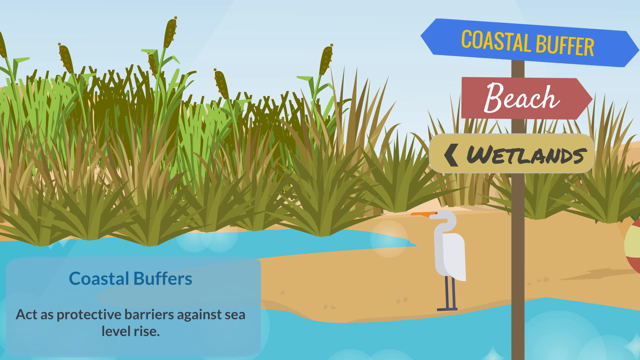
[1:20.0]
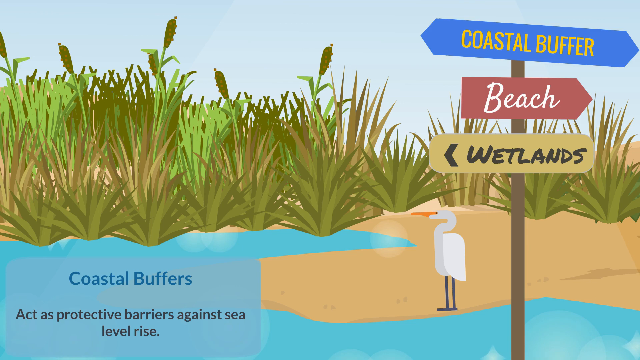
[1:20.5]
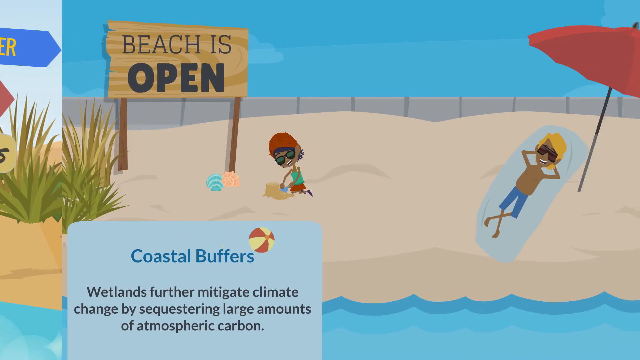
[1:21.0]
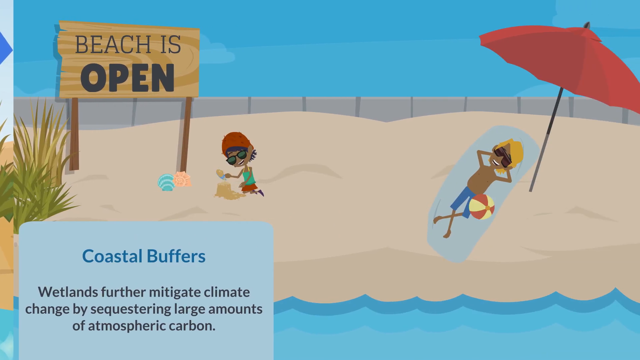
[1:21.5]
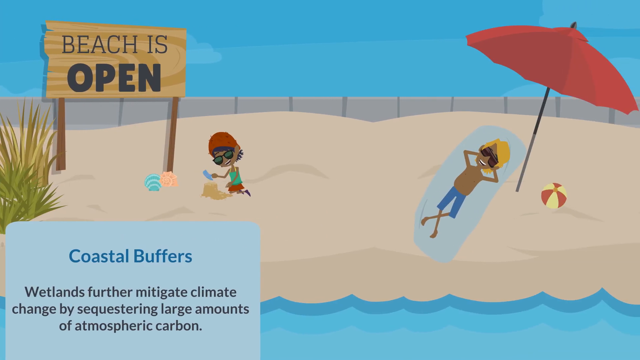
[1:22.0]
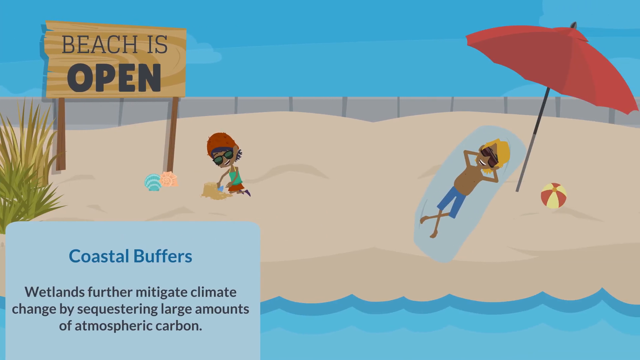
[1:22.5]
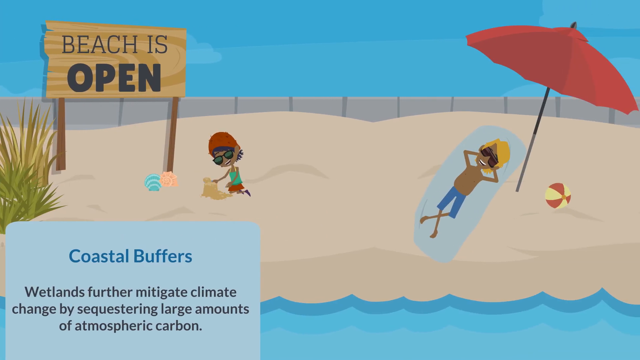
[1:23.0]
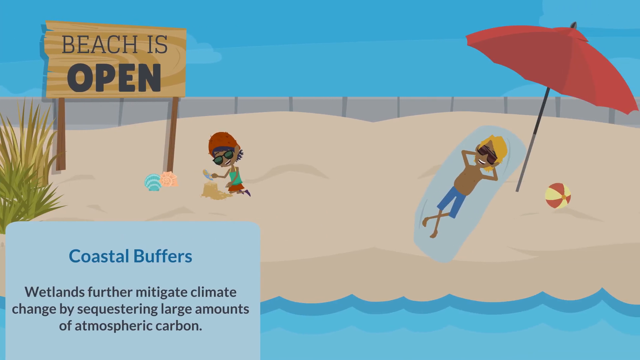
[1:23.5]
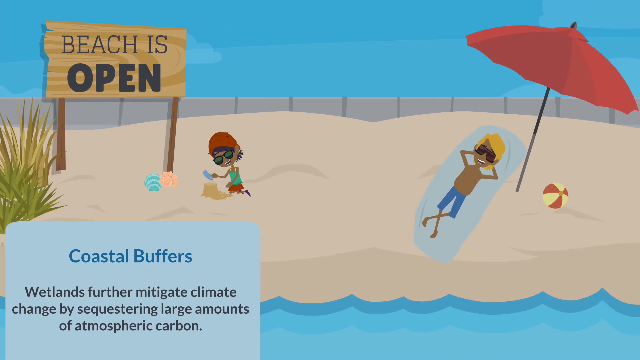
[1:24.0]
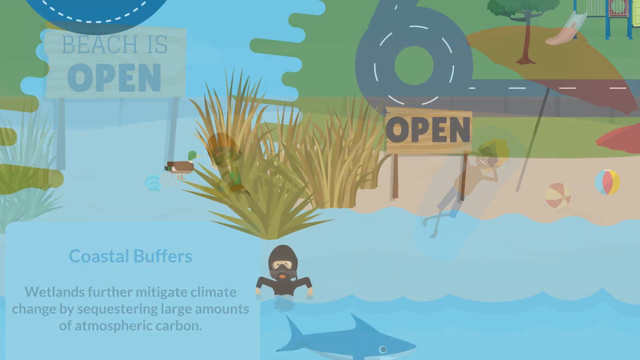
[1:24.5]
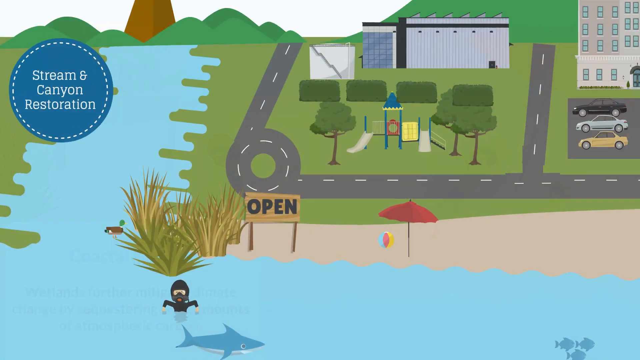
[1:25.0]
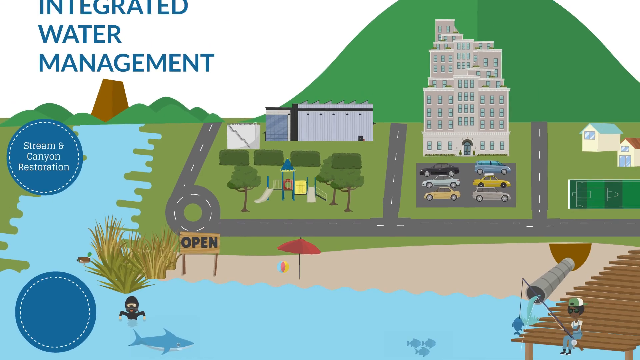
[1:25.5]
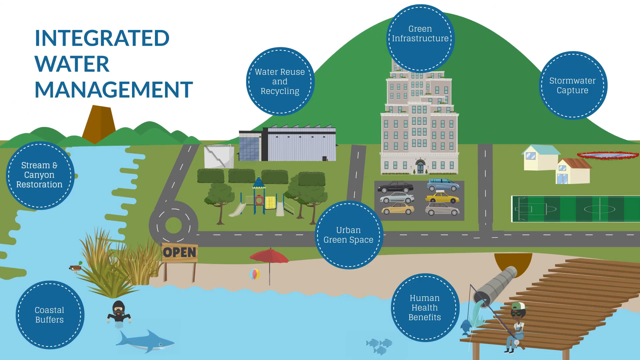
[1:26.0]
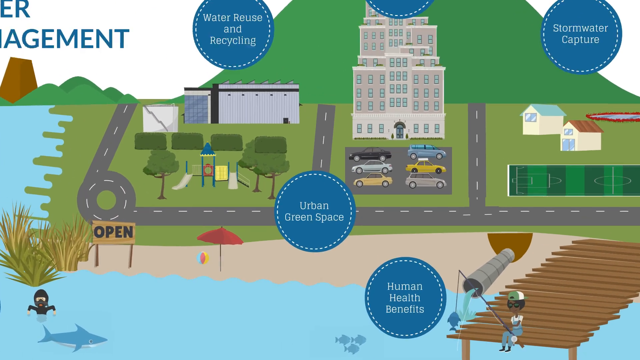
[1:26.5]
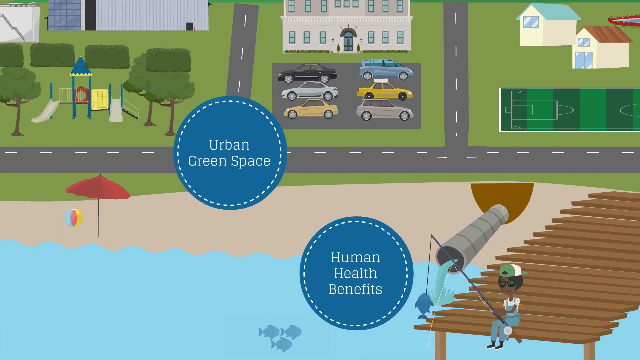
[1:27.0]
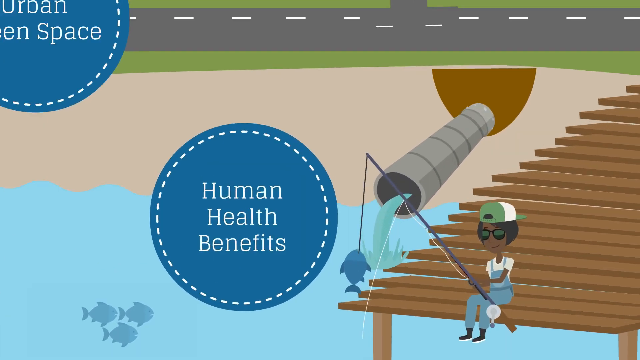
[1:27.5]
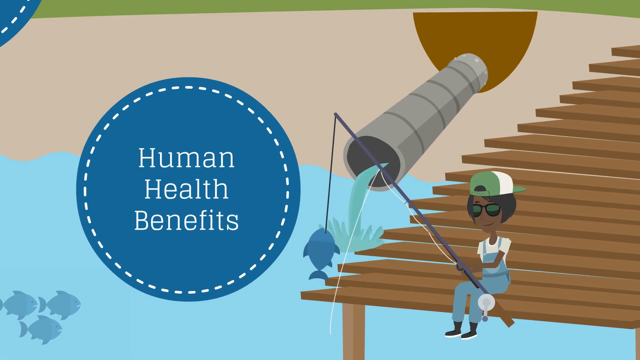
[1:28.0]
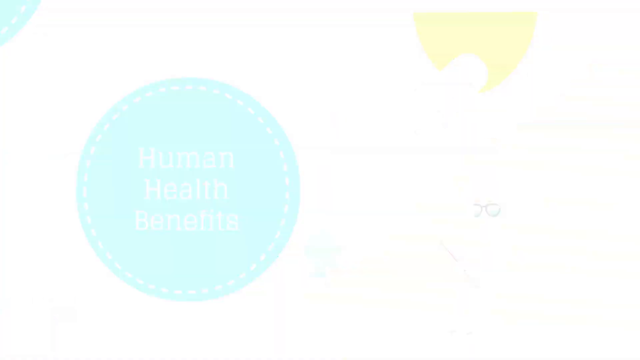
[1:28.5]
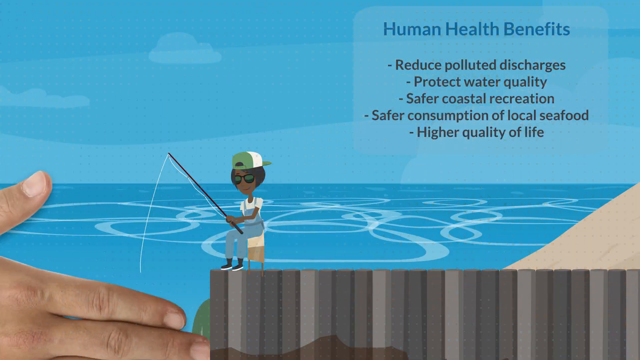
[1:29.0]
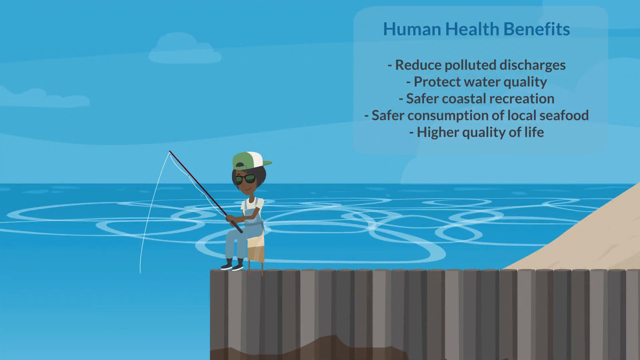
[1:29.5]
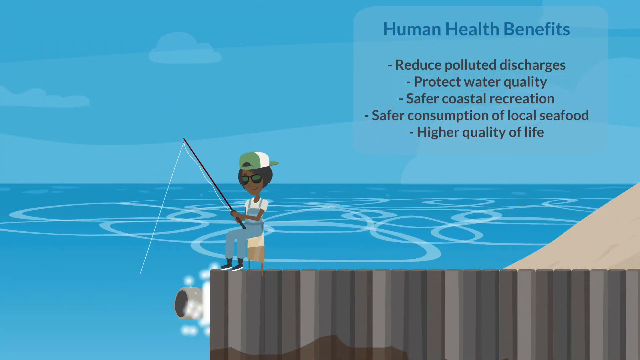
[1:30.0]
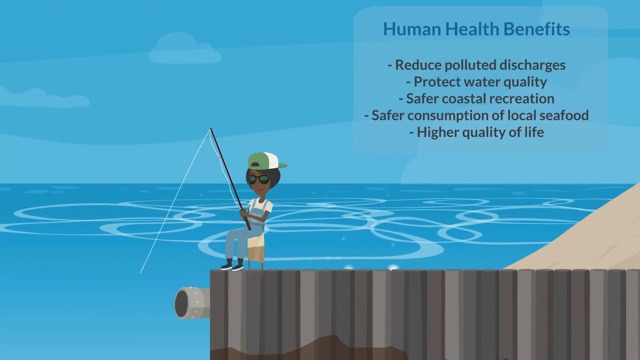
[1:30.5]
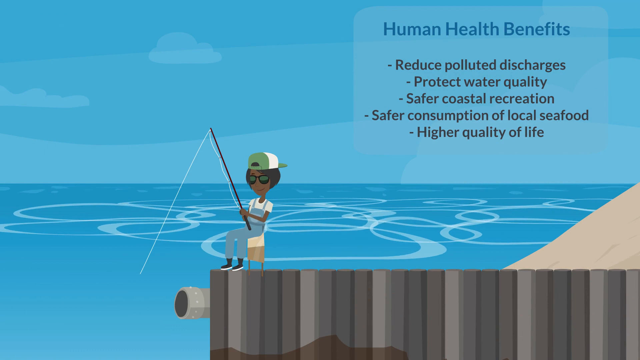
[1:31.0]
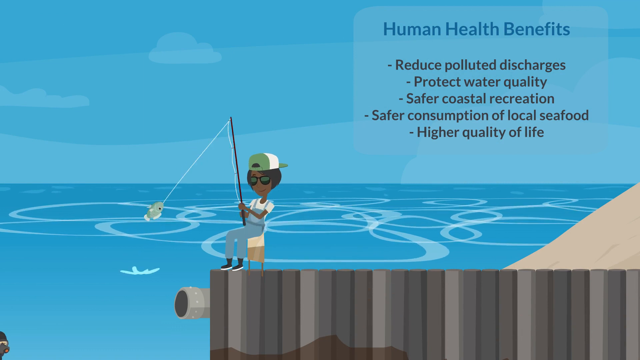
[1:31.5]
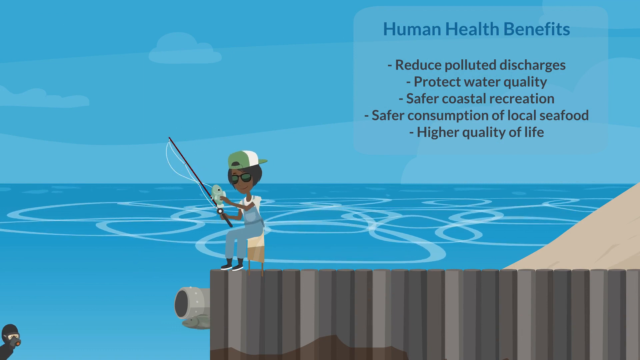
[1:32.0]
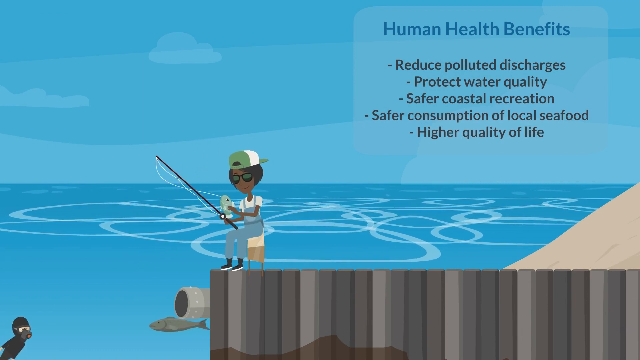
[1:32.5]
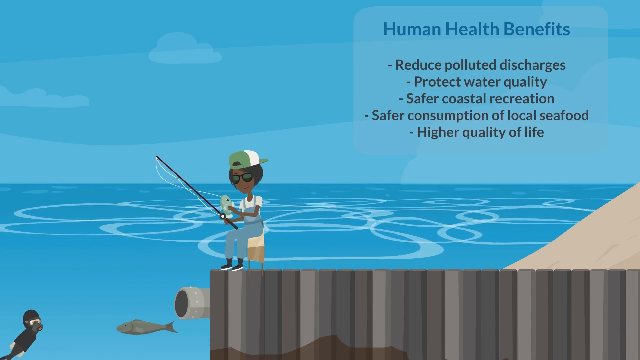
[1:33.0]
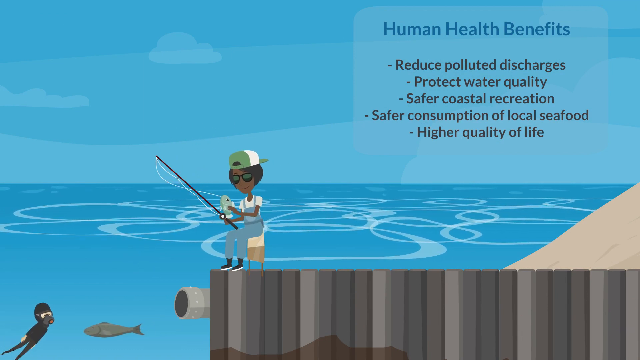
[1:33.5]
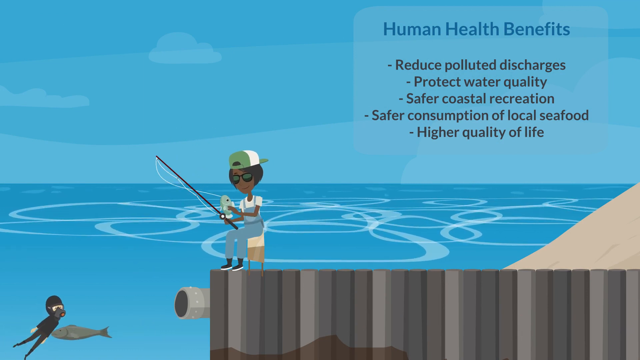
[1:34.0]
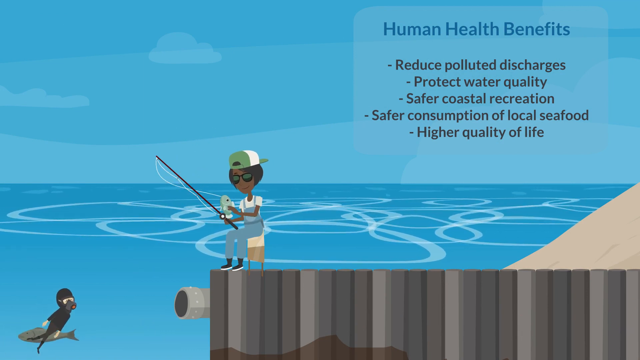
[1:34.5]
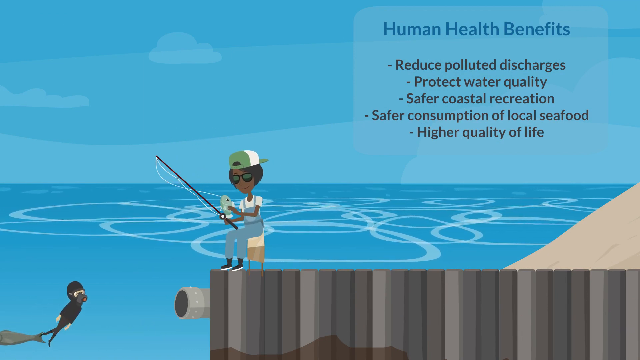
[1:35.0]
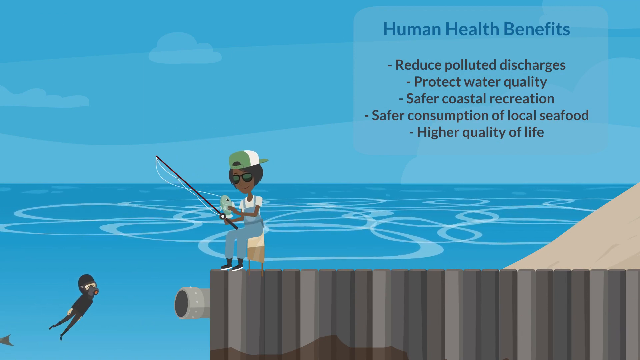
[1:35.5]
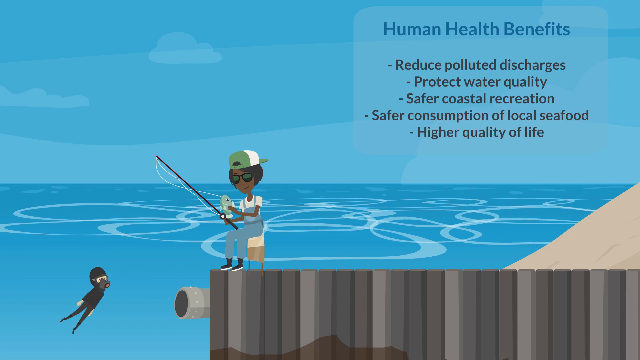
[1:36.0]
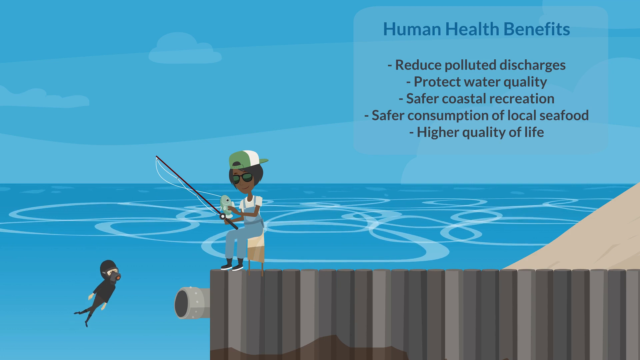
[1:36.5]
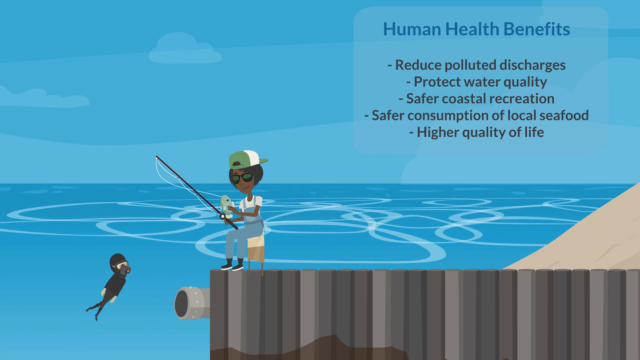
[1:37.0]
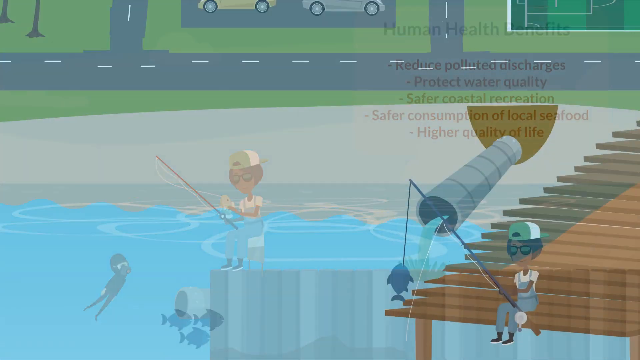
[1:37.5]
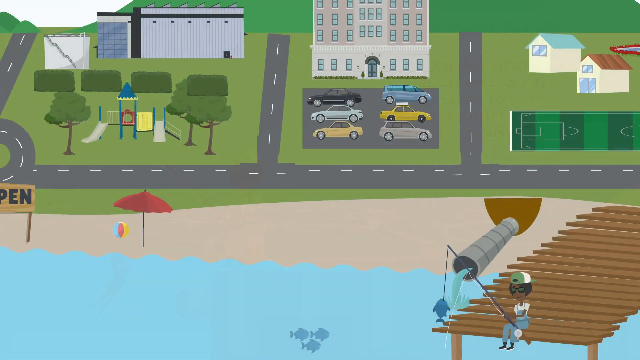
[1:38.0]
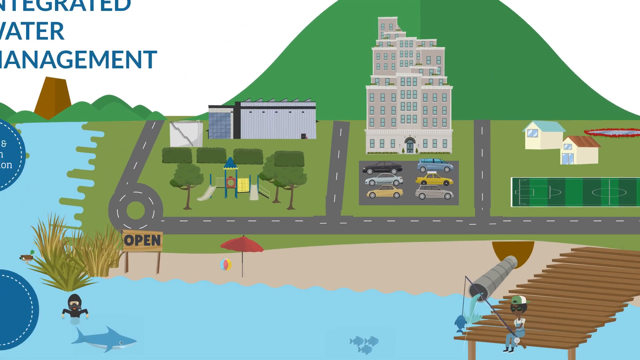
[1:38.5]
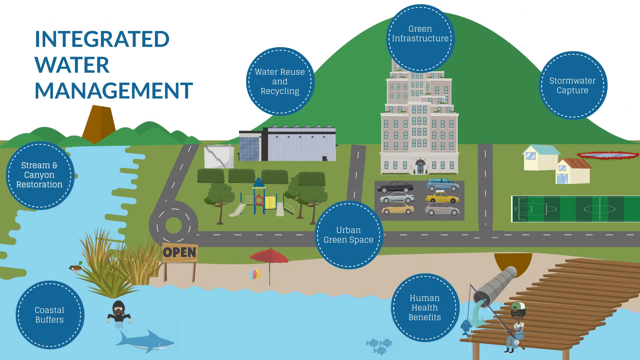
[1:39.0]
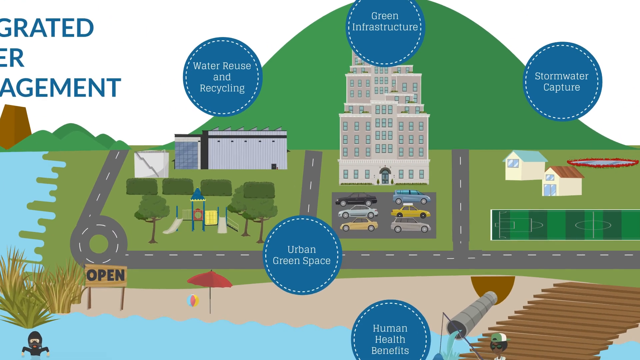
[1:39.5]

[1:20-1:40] Text about beaches, coastal buffers and wetlands appears, mentioning that they "further mitigate climate change," followed by "Human Health Benefits." A woman on a pier looks like she has caught a fish. In the background, where she is fishing, there is an overflow of water coming out that looks like runoff, and the text "Human Health Benefits" appears. The scene cuts to another person who looks like they are fishing, with "human health benefits" in the background and text reading "Reduces polluted discharges, Protects water quality, Safer coastal recreation, Safer consumption of local seafood, Higher quality of life." The person fishing catches another fish. A person scuba dives in the ocean in clear blue water as a very large fish swims past them.